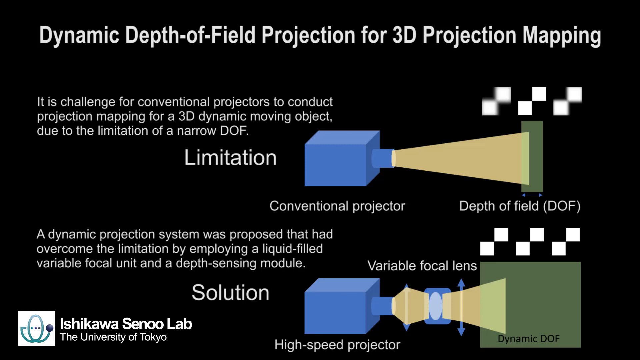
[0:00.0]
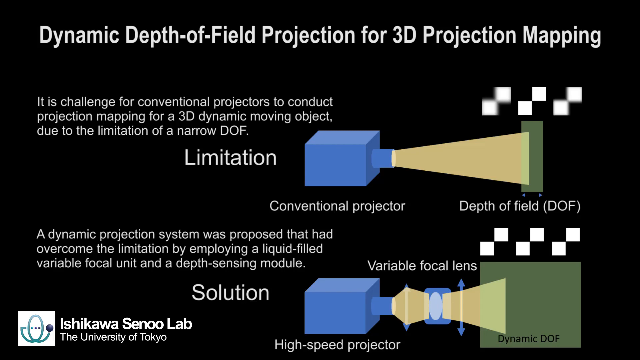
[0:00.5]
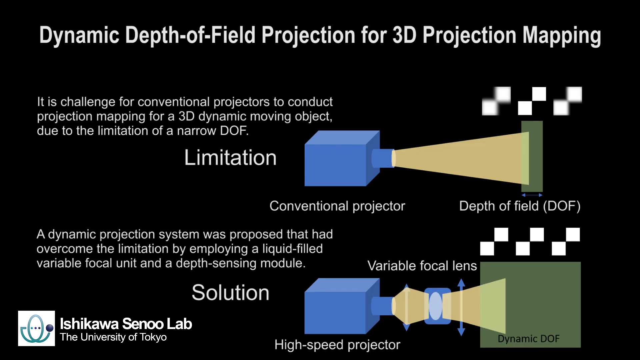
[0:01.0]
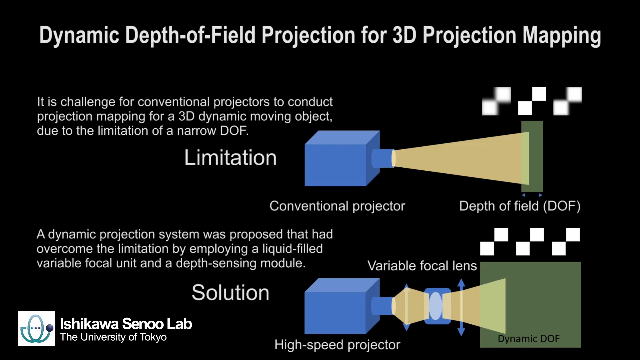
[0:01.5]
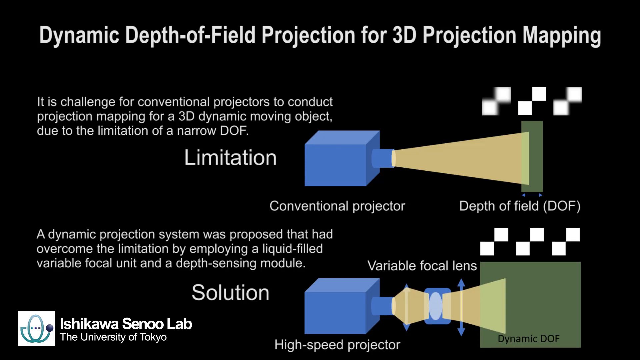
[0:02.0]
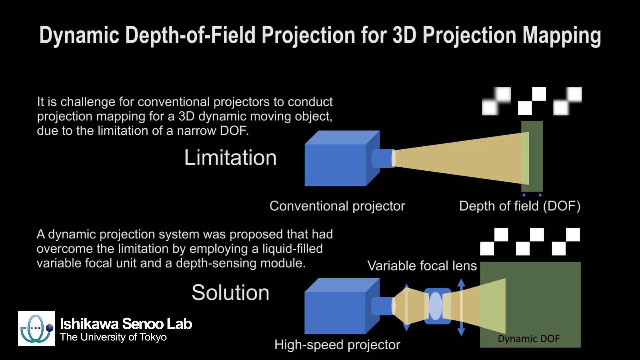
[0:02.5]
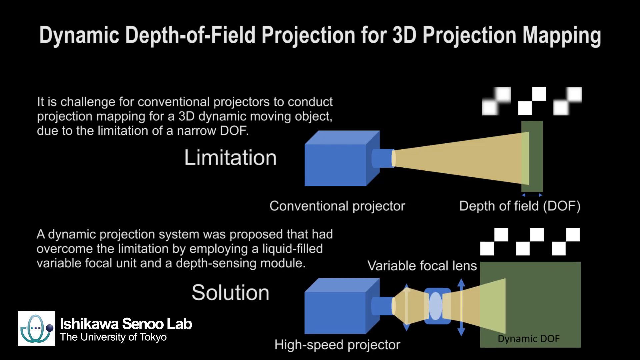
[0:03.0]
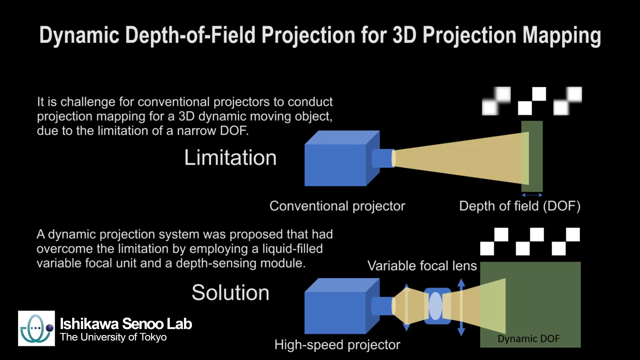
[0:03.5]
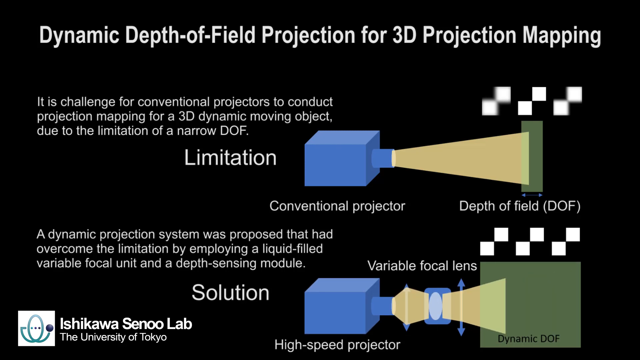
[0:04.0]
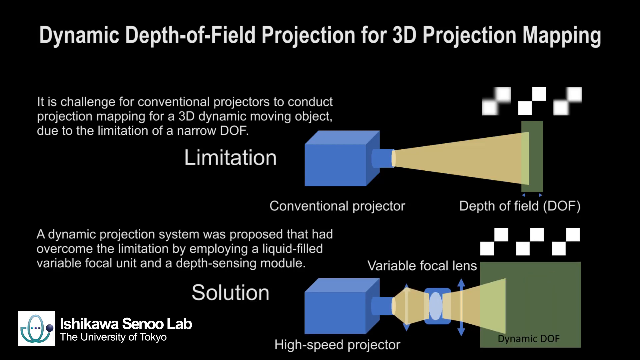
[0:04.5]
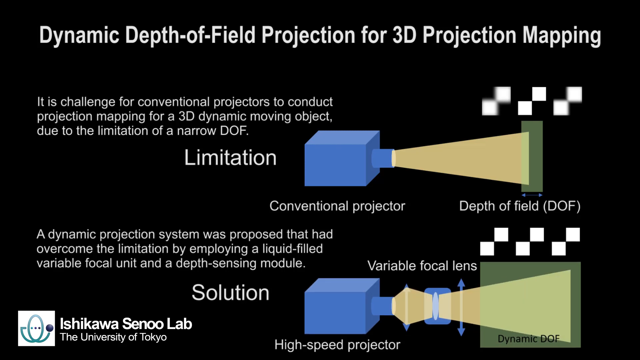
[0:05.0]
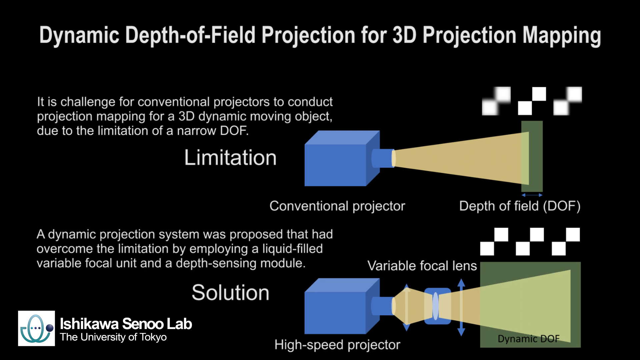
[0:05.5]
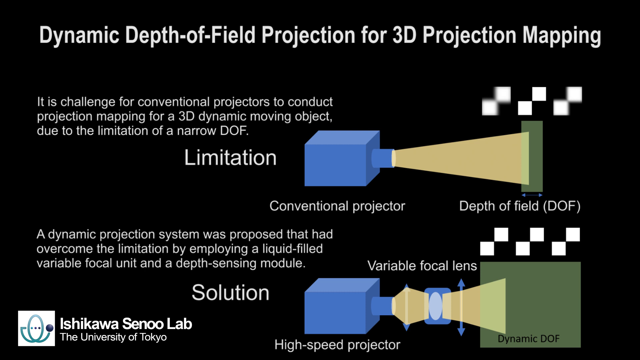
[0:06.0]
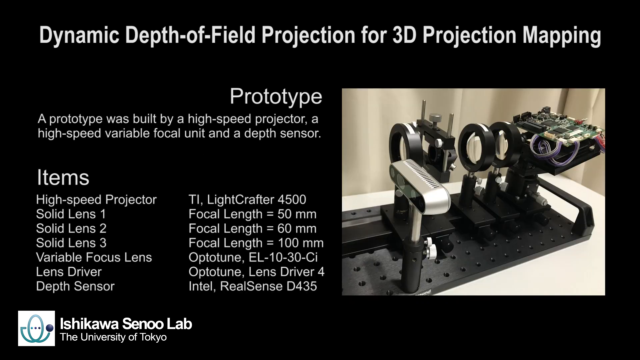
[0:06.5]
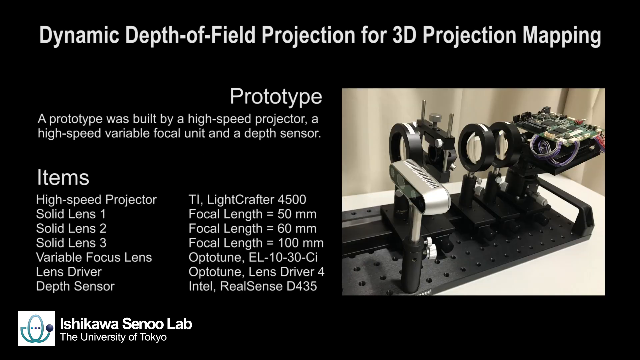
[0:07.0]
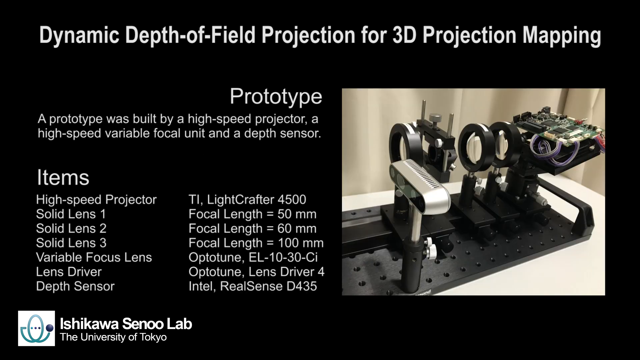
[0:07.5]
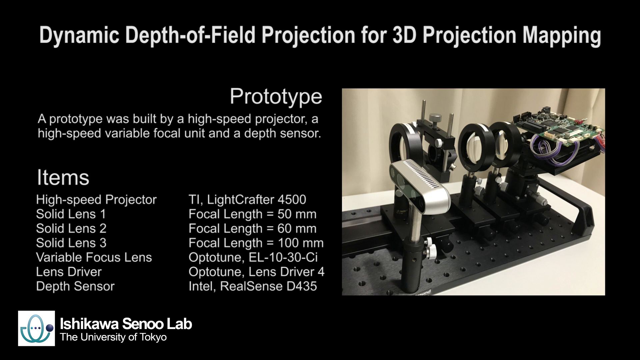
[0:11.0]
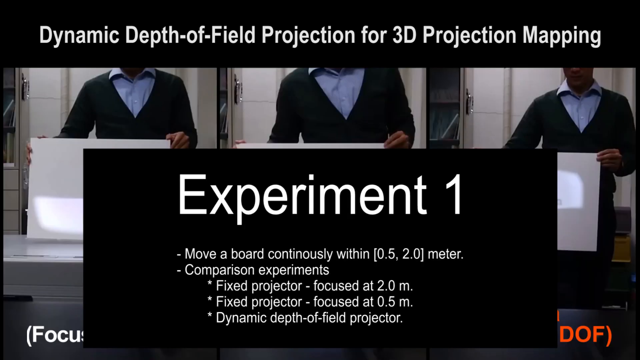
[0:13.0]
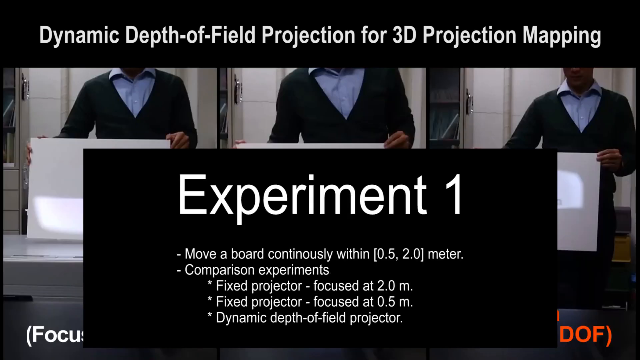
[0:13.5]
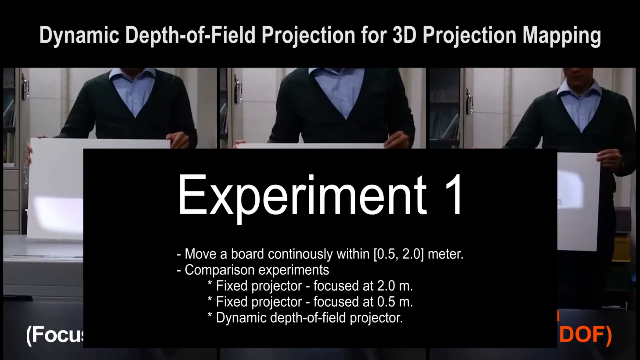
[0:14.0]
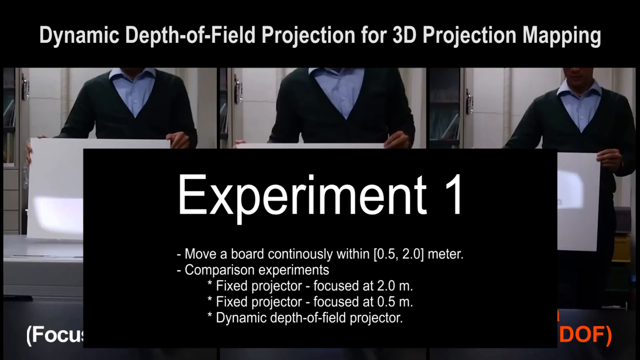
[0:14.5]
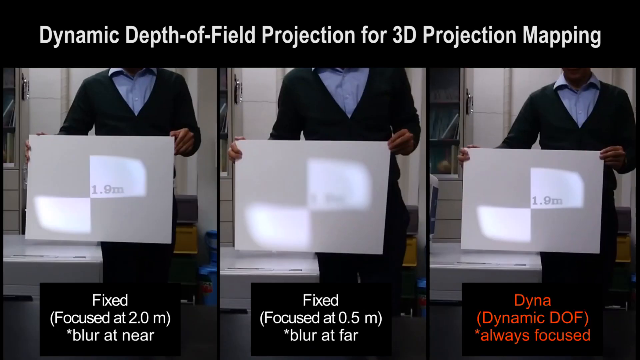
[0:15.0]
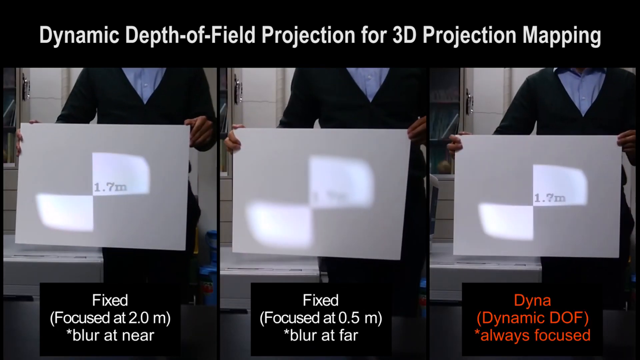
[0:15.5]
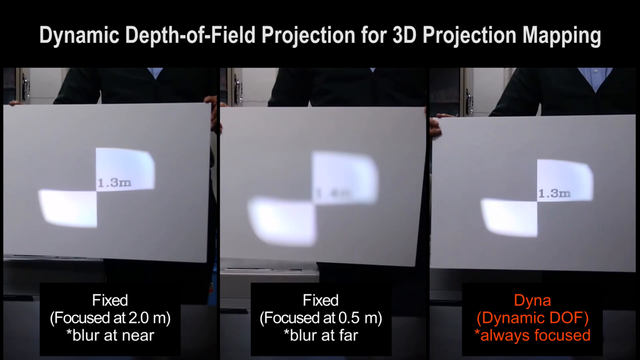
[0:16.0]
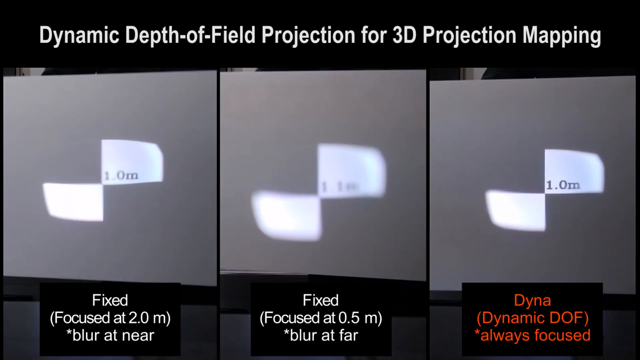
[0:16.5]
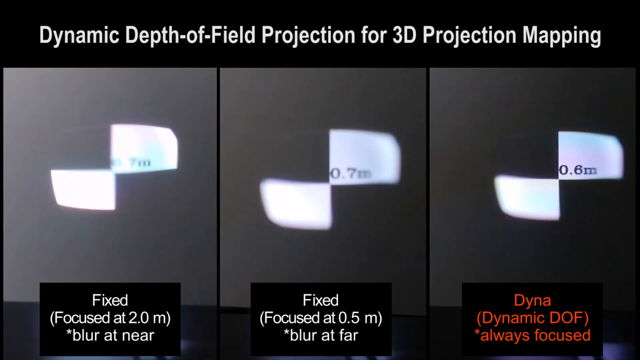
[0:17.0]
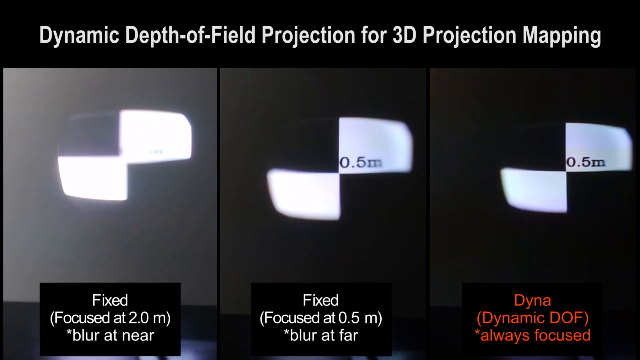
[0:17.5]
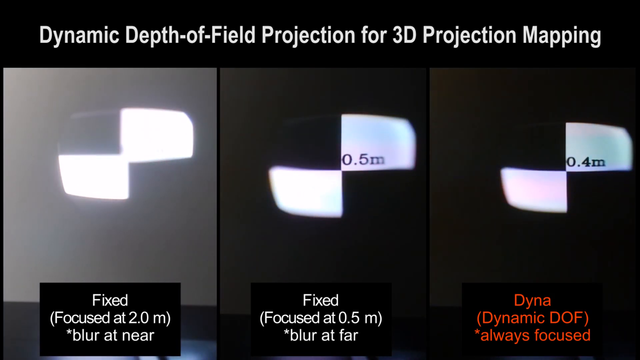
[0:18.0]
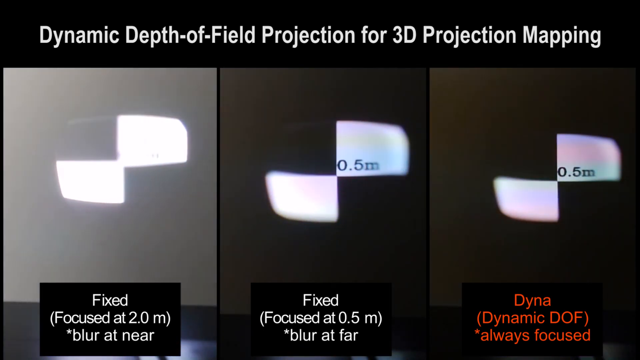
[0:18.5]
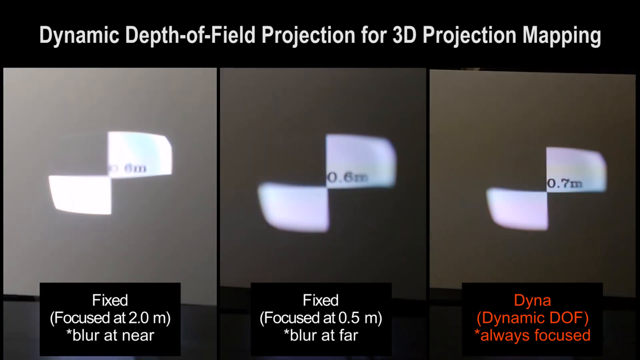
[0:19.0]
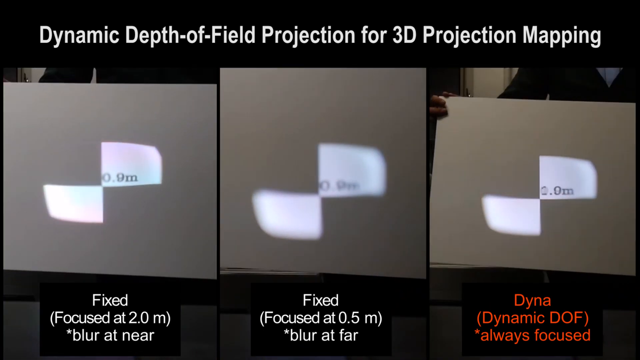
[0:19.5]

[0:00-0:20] The video has a black background with white writing. The title is "Dynamic Depth of Field Projection for 3D Projection Maps." There are multiple images. One image is a projector with yellow light coming from it; at the end of the yellow light, it looks like the light hits a green block, and there are six white squares above that green block. There are two very plain images. Another image has words above it that say "variable focus"; something is in the middle of the yellow light, and there could be a bigger version of the green block with six white squares above it. There is information in the description. After that comes an image of a prototype, and then an image of a man on three screens. The screens seem to show images of squares adjacent to each other, top and bottom, with little numbers on them.